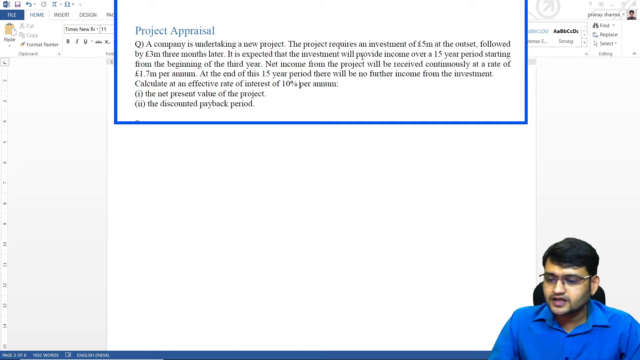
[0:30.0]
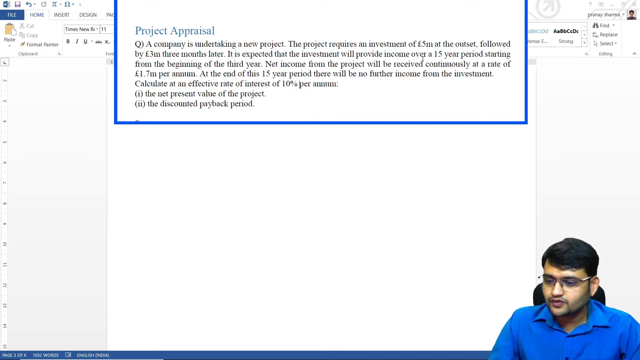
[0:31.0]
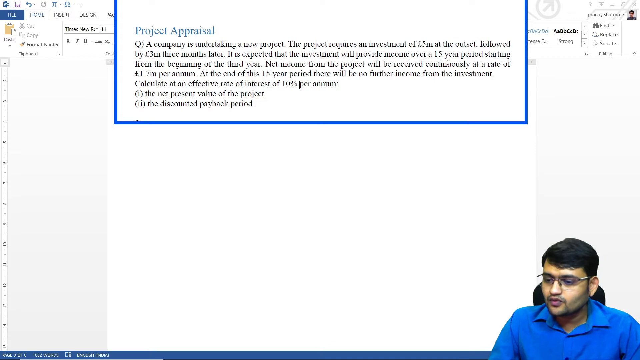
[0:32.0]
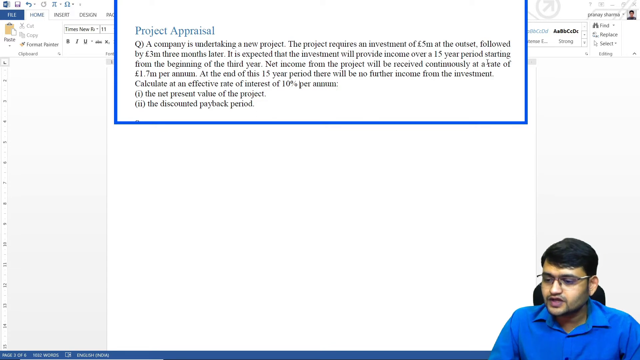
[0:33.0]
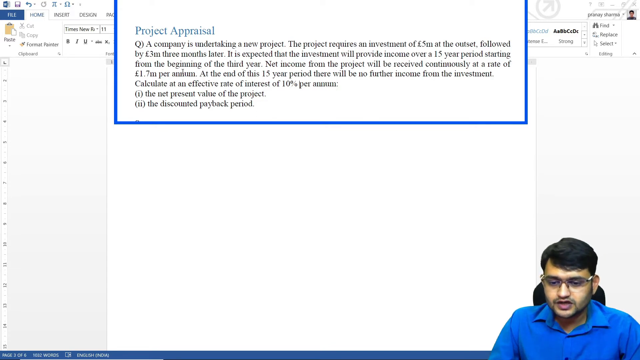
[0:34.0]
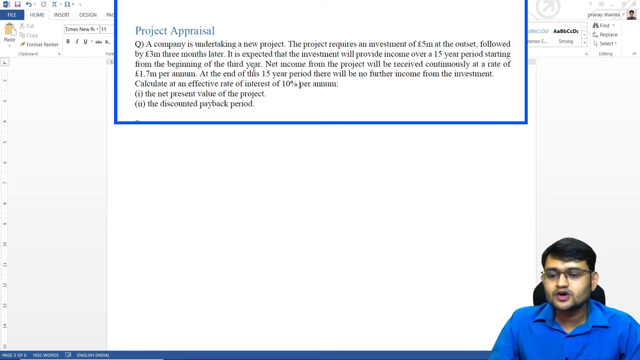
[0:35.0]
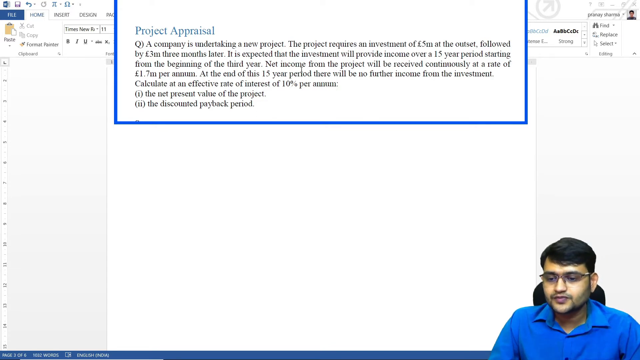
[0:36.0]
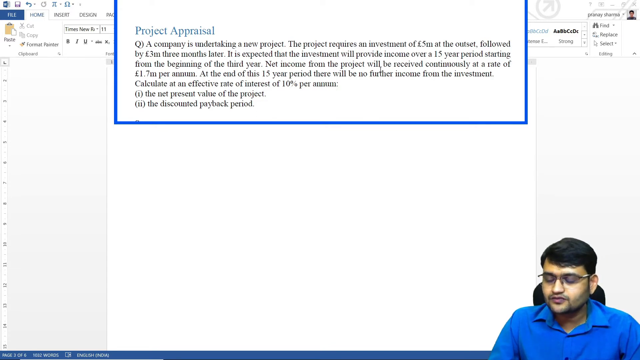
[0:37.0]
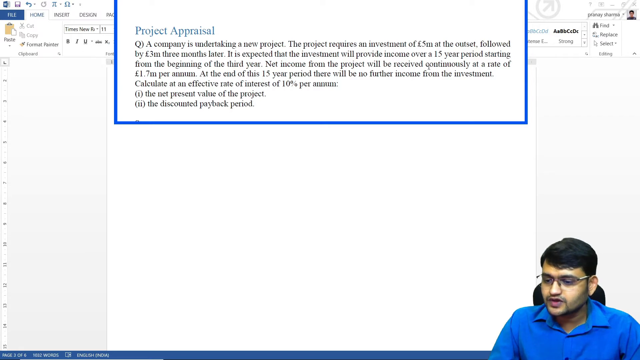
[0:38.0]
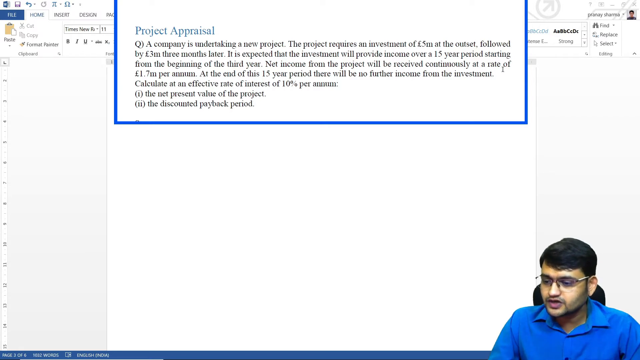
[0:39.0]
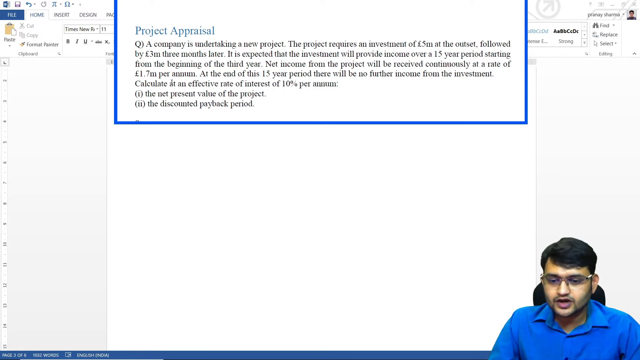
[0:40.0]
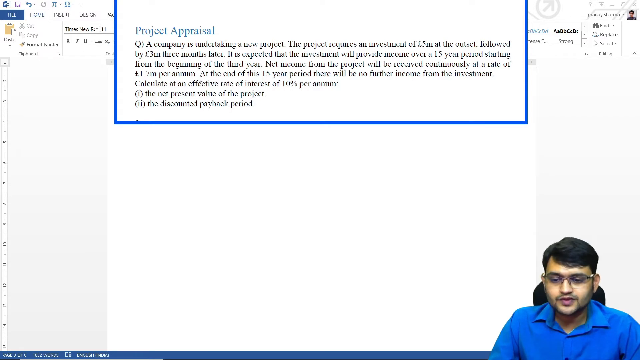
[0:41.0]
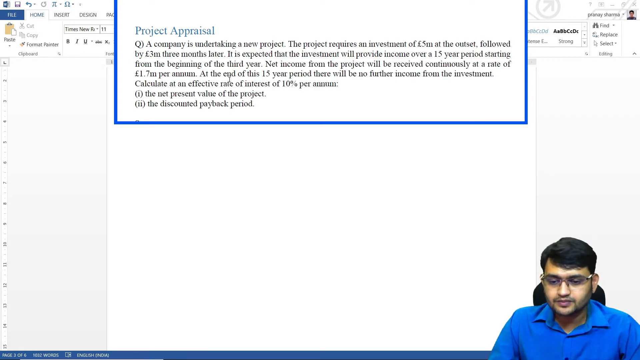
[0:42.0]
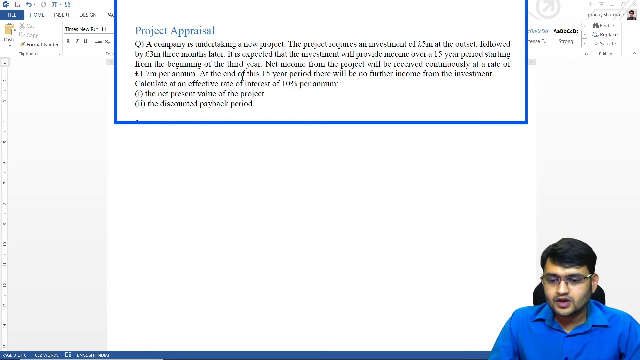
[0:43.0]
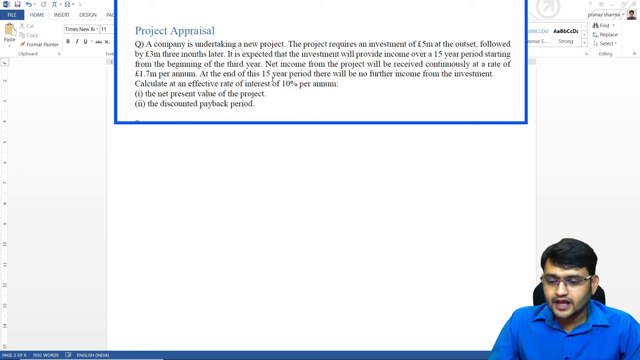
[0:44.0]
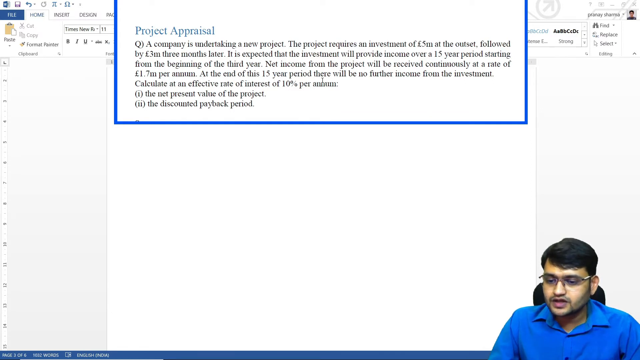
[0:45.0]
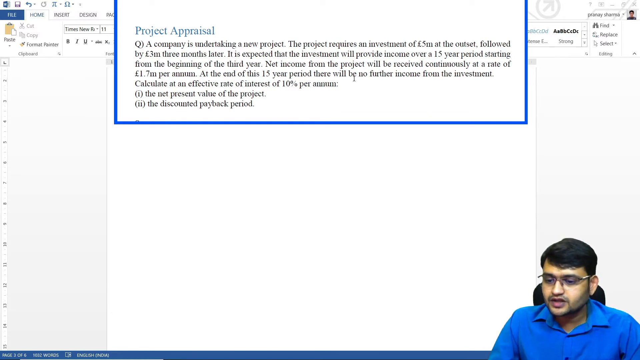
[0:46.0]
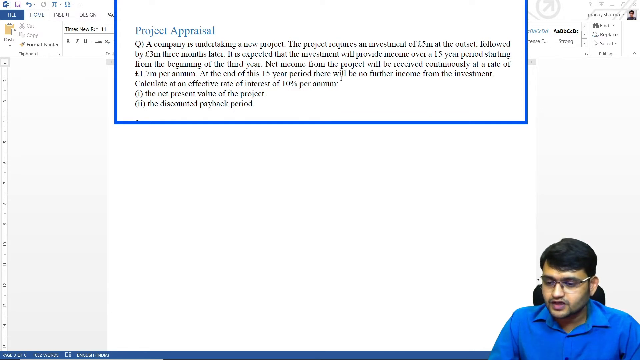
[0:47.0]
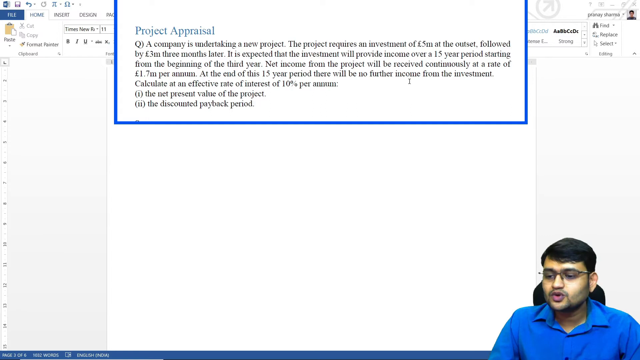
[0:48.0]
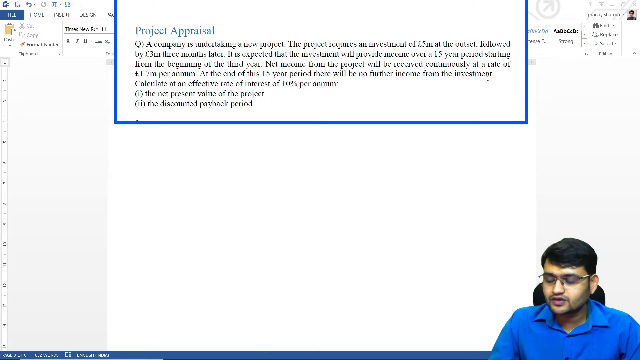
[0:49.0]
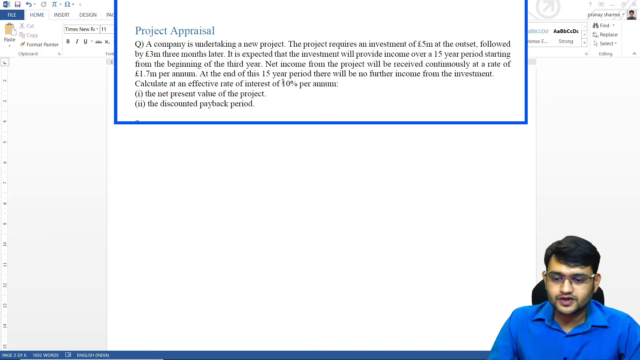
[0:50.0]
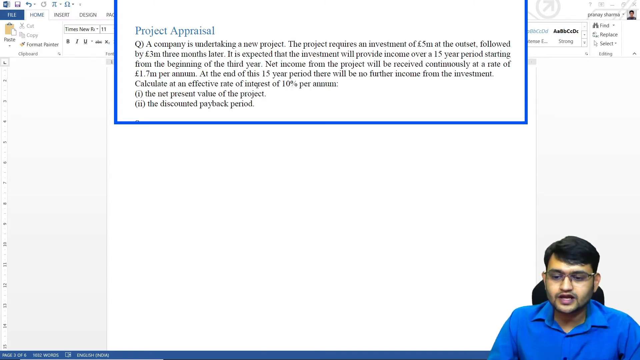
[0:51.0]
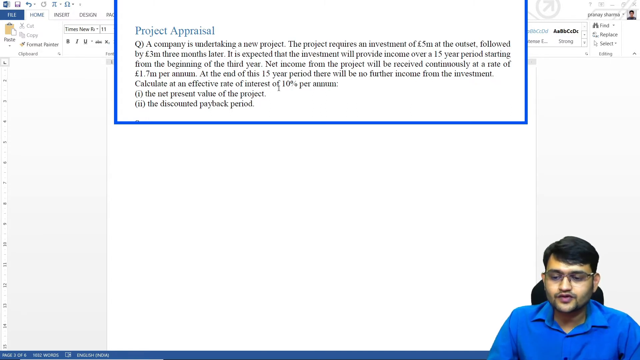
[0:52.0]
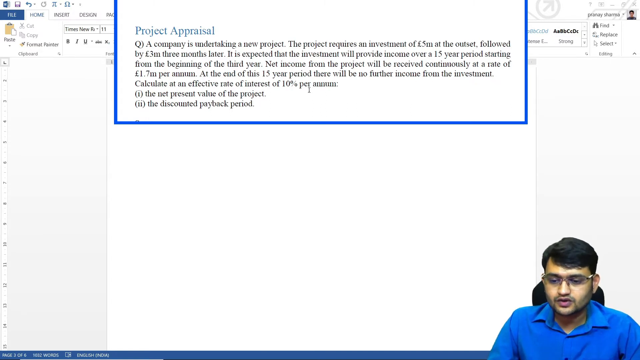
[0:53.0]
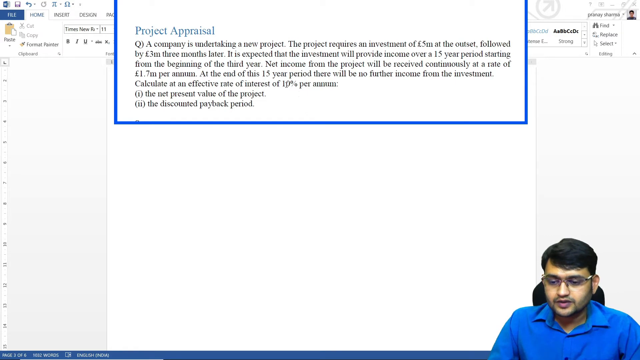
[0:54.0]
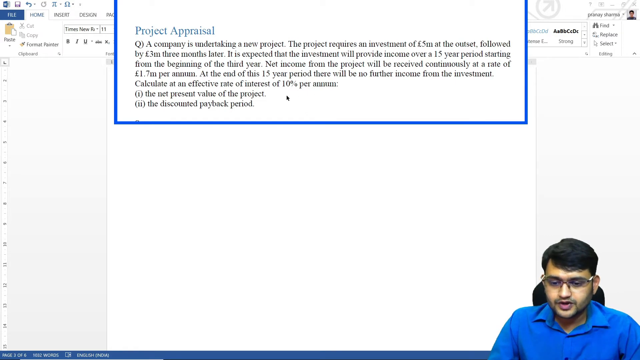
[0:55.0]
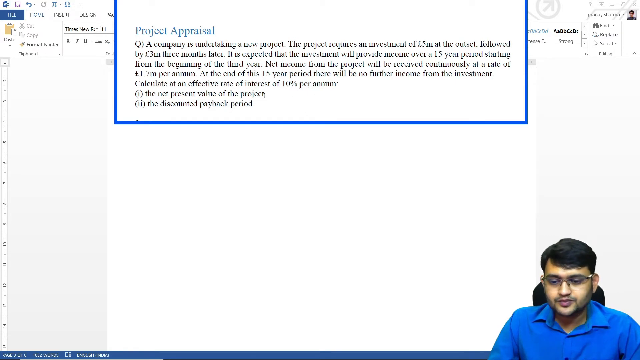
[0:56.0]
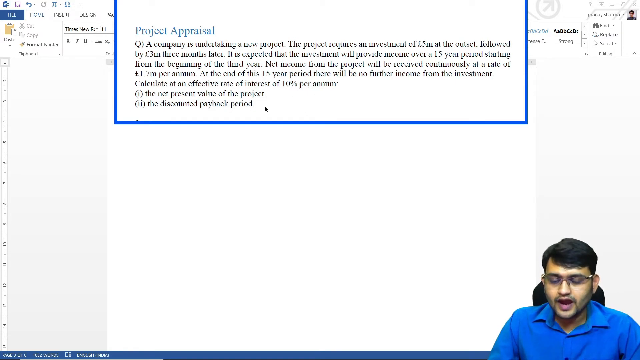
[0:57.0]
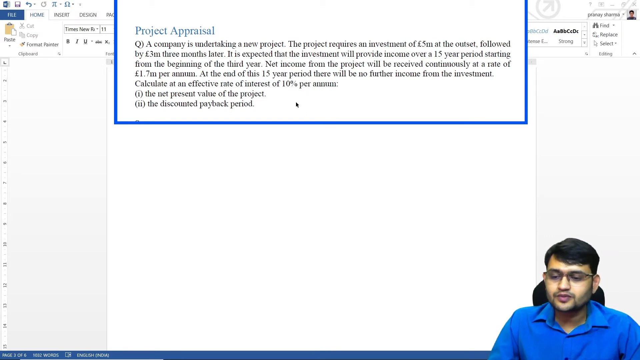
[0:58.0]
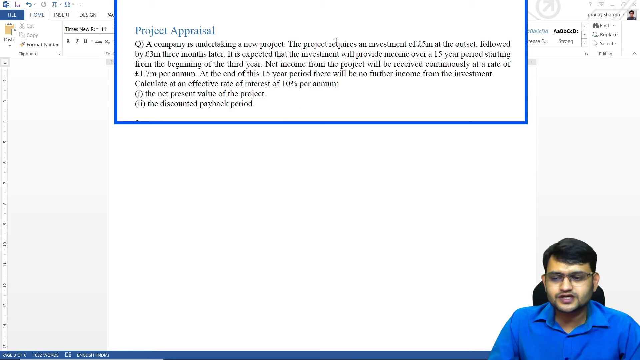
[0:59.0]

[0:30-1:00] The man keeps speaking as he moves his cursor along the entire paragraph. He hesitates briefly on the sentence "at the end of the 15 year period, there will be no further income from the investment", moving the cursor shakily along it, then moves it back to the number 15 in that sentence before going down to the next sentence. He circles the cursor over the words "per annum" in the sentence about calculating at an effective rate of interest of 10 percent per annum, then moves down to the end of the paragraph and stops slightly to the right of "(i) the net present value of the project" and "(ii) the discounted payback period" at the bottom.